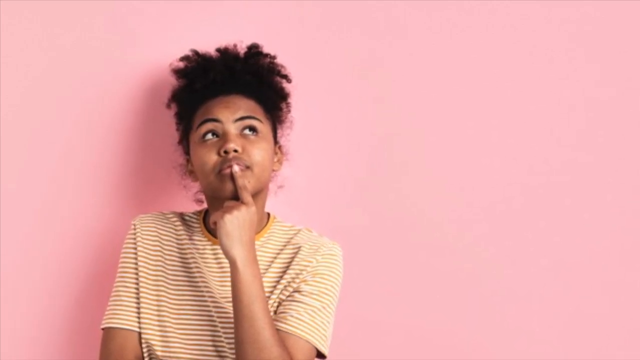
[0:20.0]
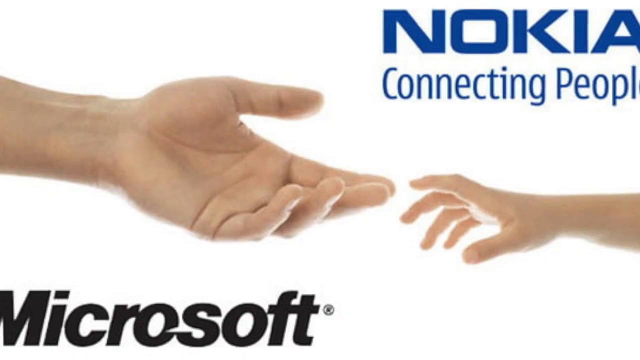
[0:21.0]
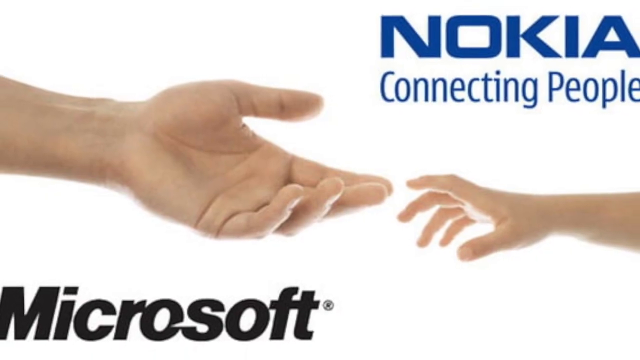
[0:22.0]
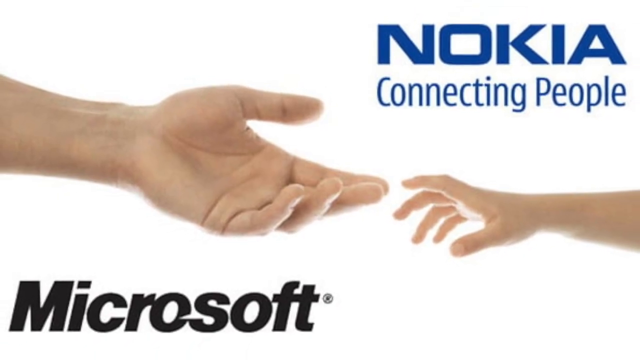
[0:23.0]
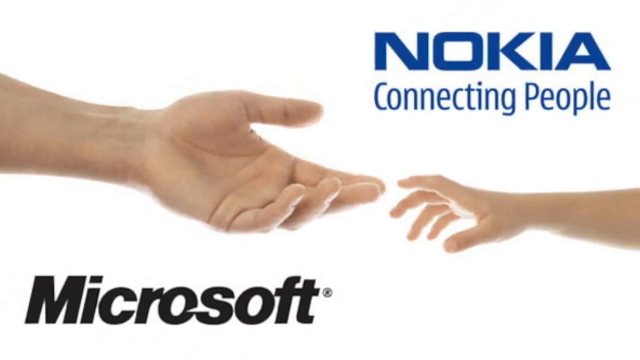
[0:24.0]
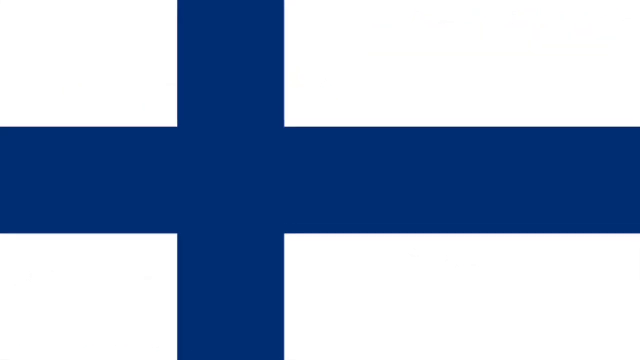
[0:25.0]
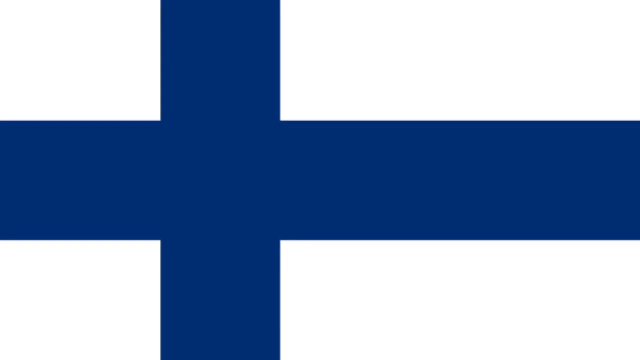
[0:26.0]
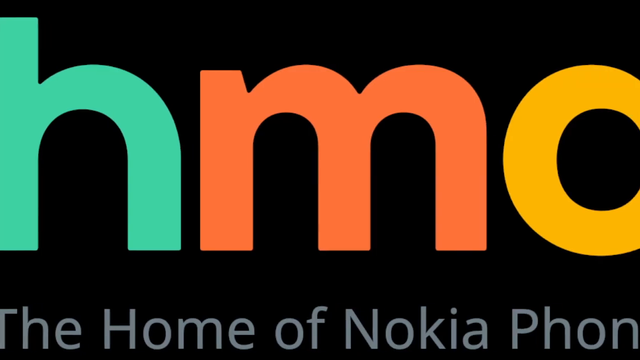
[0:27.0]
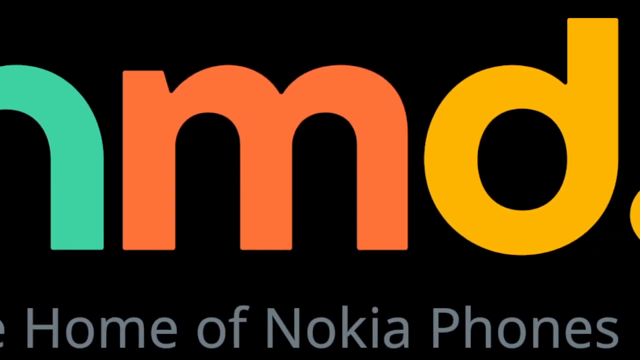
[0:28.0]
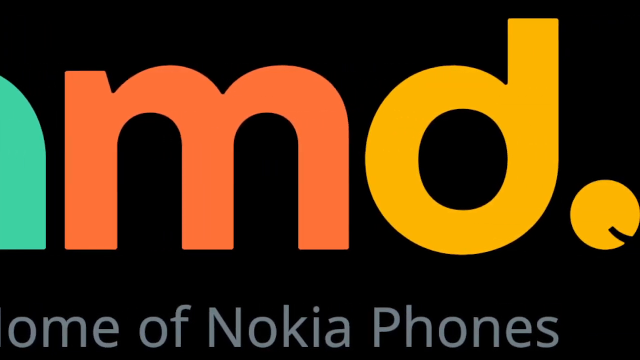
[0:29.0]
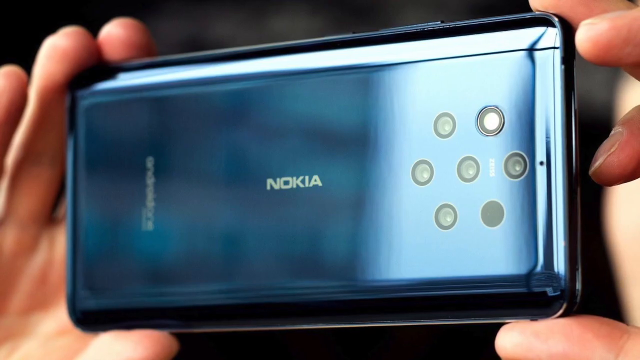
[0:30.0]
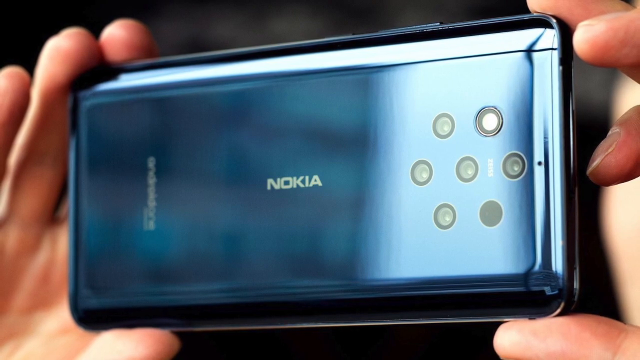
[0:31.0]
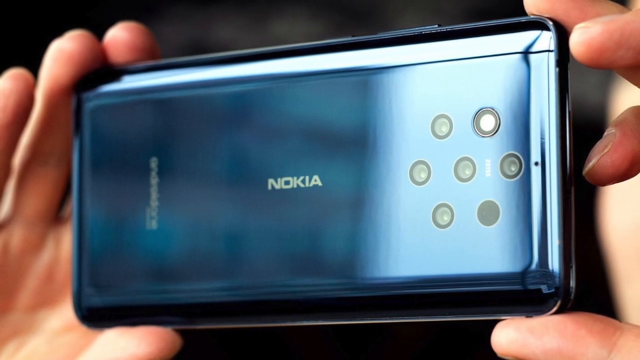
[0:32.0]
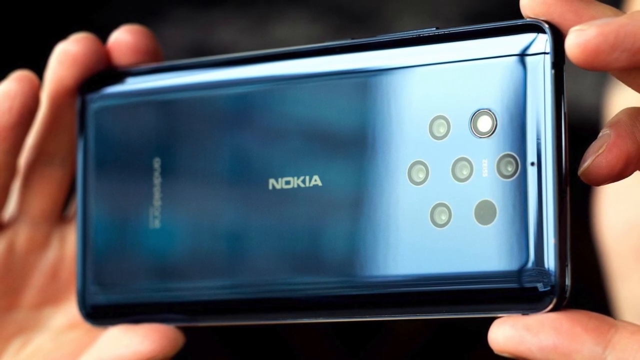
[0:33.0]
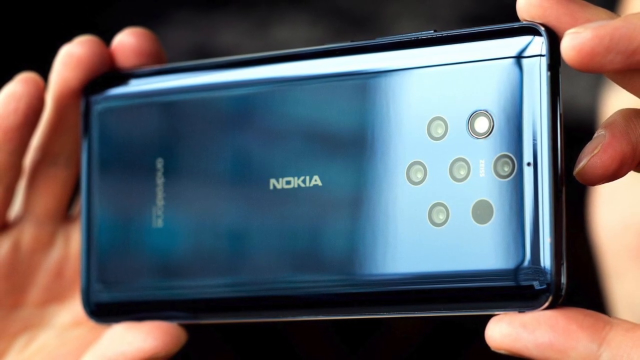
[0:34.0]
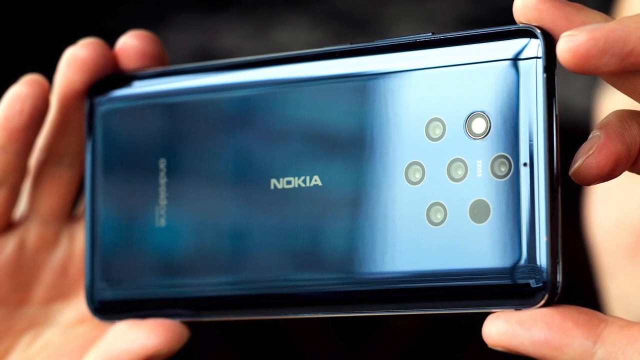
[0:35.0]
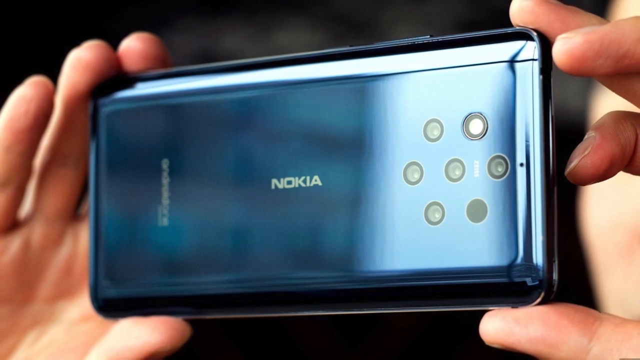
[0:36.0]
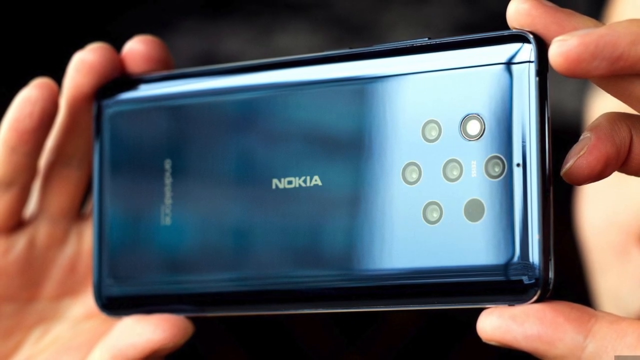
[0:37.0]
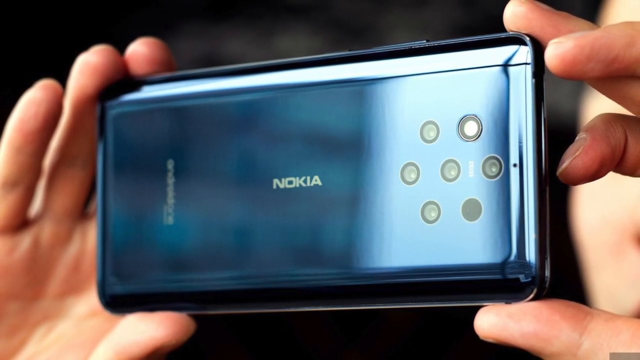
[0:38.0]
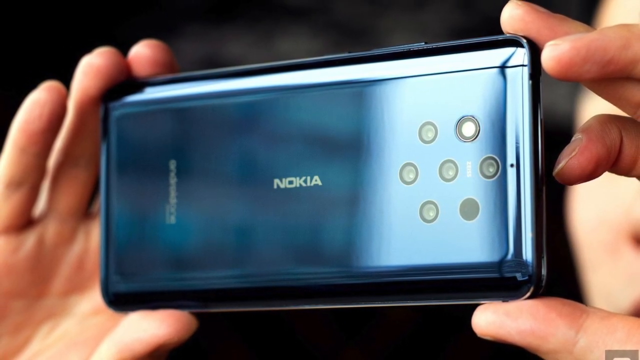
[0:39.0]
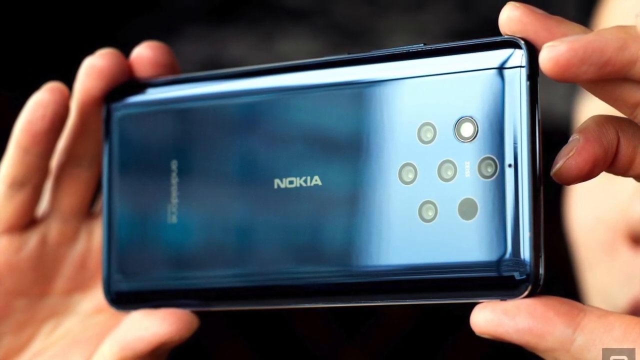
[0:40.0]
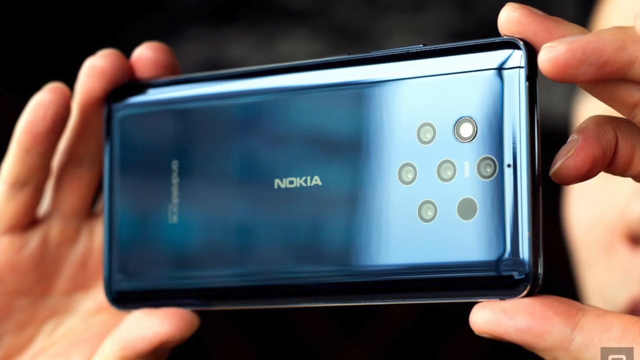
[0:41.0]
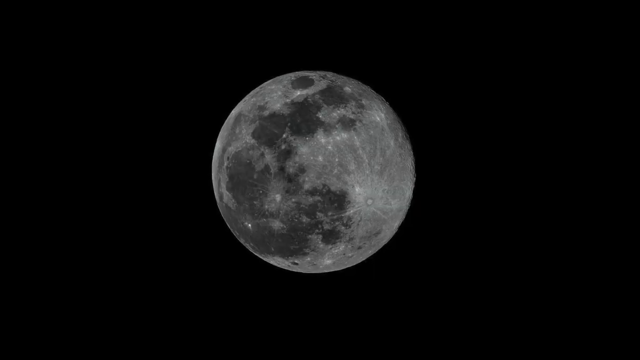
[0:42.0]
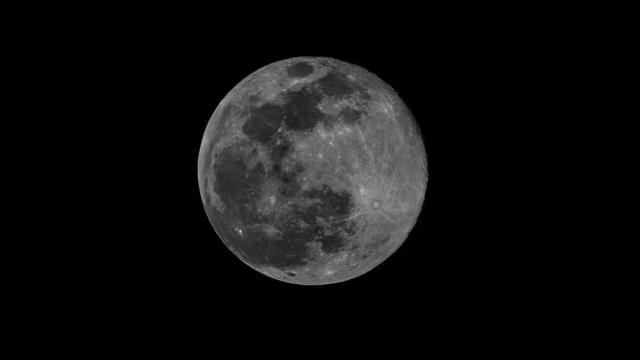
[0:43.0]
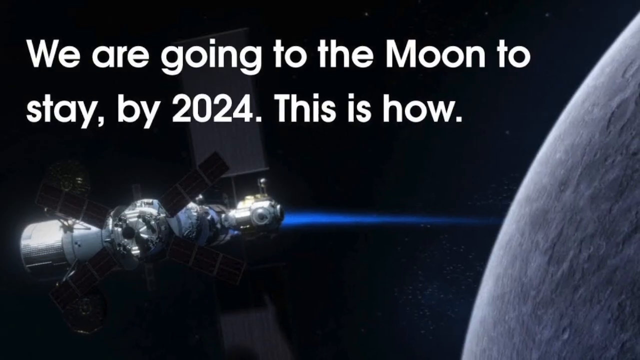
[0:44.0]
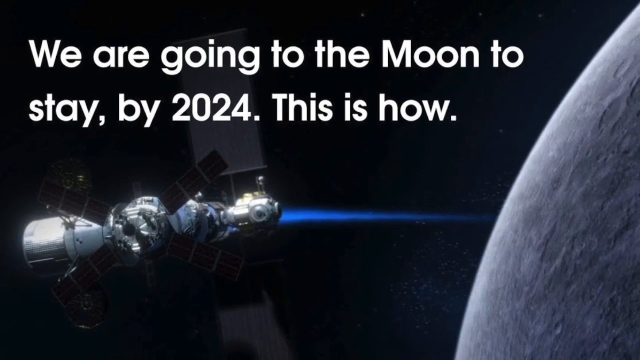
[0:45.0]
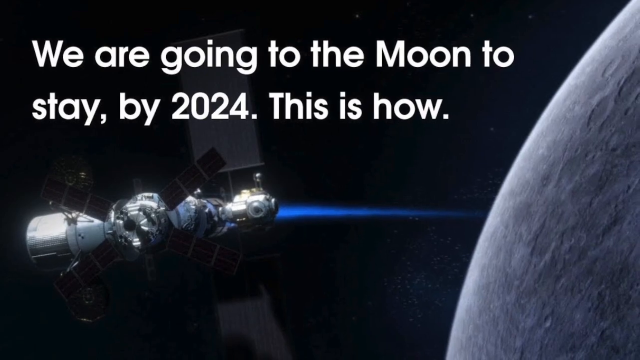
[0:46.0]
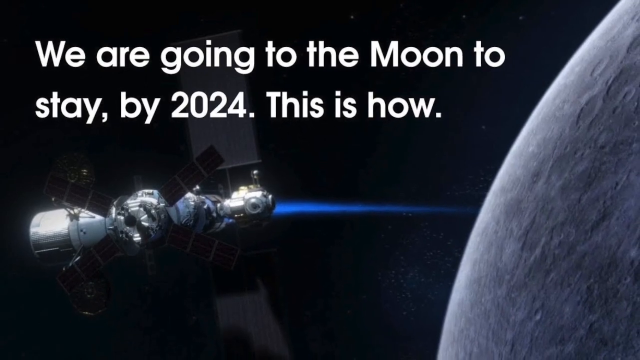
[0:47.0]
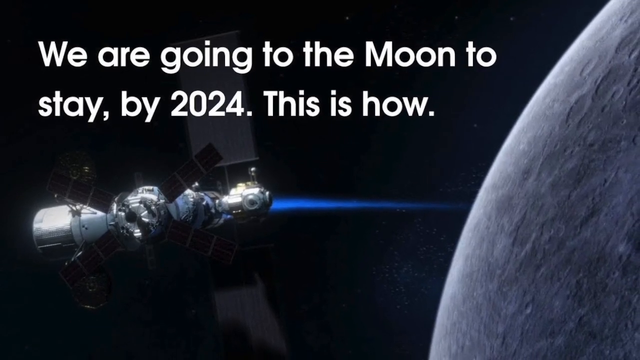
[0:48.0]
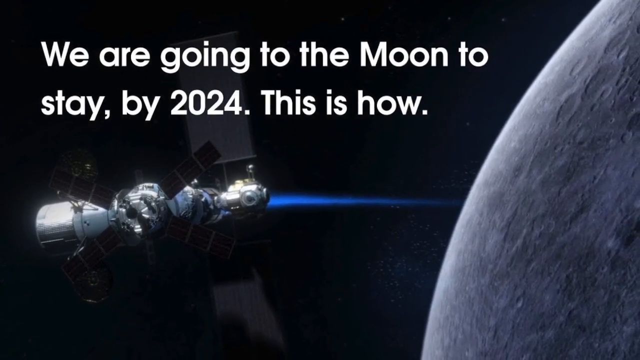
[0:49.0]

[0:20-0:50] A young Black woman with dark hair and a striped shirt sits in a room in front of a pink wall, her left finger on her bottom lip, looking up, as the video zooms in on her slightly. The scene changes to a left hand on the left side and a right hand on the right side reaching toward each other; the left hand is very large and the right hand very small. The camera zooms out, revealing the words "Nokia connecting people" in the upper right corner and the word "Microsoft" with a trademark symbol in the bottom left corner. Next comes a gigantic purple cross with white in the corners, and the camera zooms in. A black screen follows with letters on it, in which "H", "M", "D" and a period can be made out. Then a pair of hands holds a Nokia phone horizontally, with the word "Nokia" on the back of the phone. The phone appears to have about seven cameras on its right side and some text on its left side. The camera zooms out very slowly to show more of the hand; the background is blurred and black, and a piece of a face becomes visible on the right side. Next, the moon is shown in the night sky and the camera zooms in on it. Then a satellite in outer space appears with text reading "we are going to the moon to stay by 2024. This is how". The satellite is in front of the moon, shooting some kind of beam at it, and the camera zooms out.